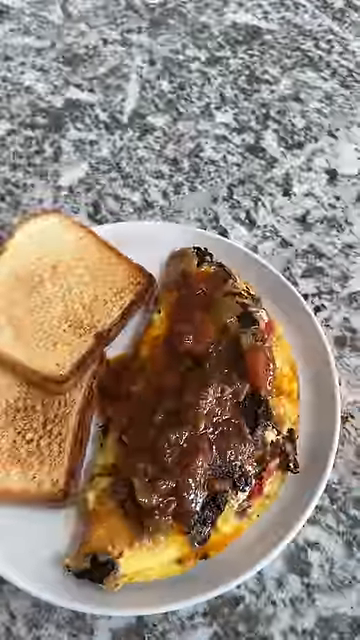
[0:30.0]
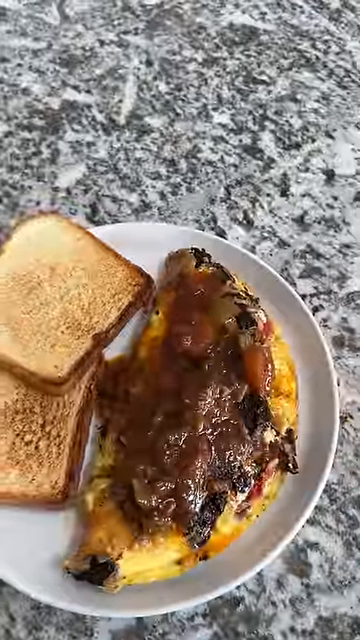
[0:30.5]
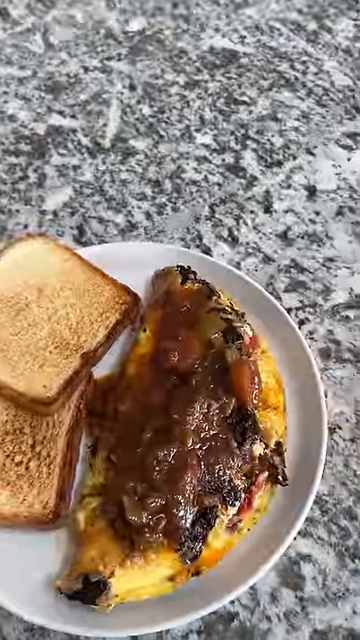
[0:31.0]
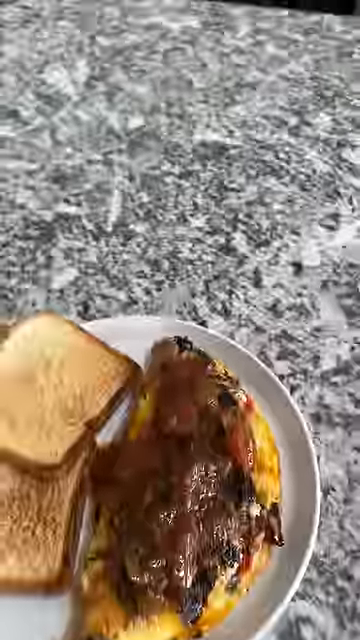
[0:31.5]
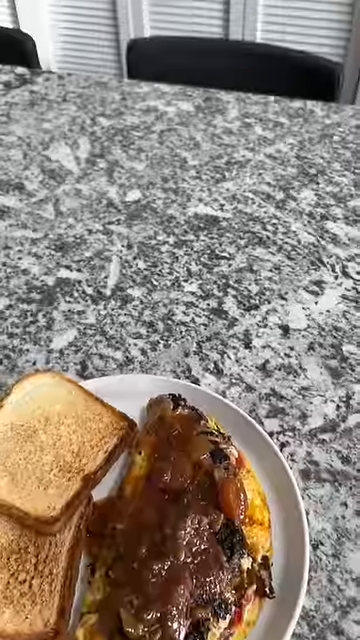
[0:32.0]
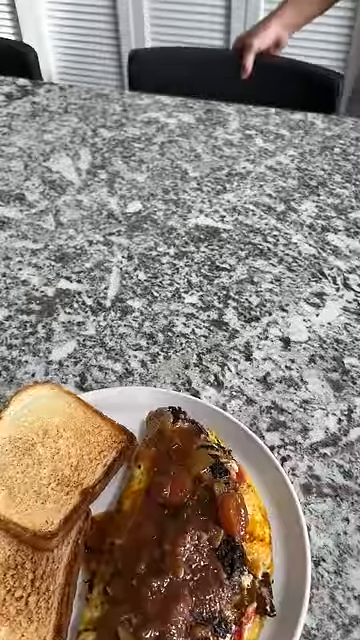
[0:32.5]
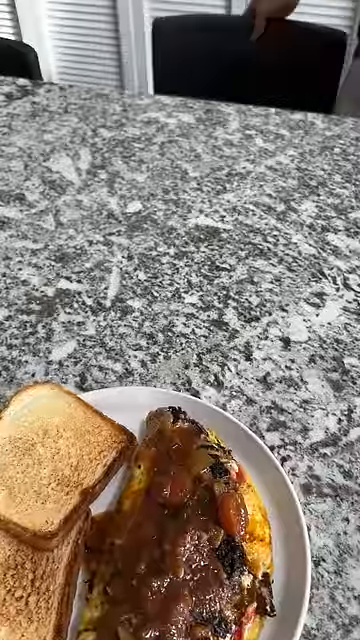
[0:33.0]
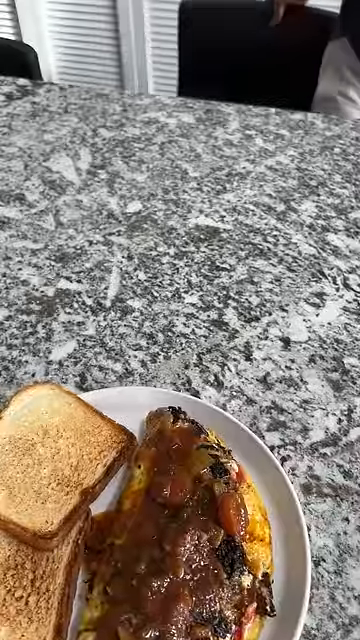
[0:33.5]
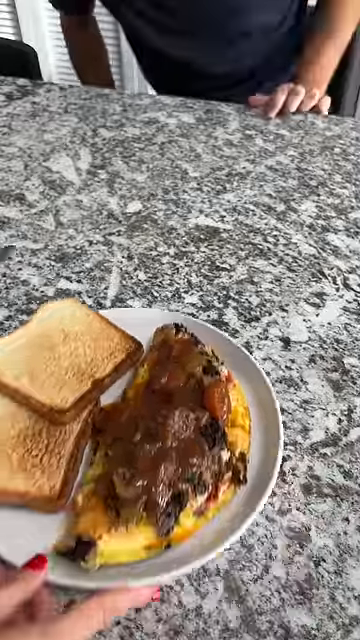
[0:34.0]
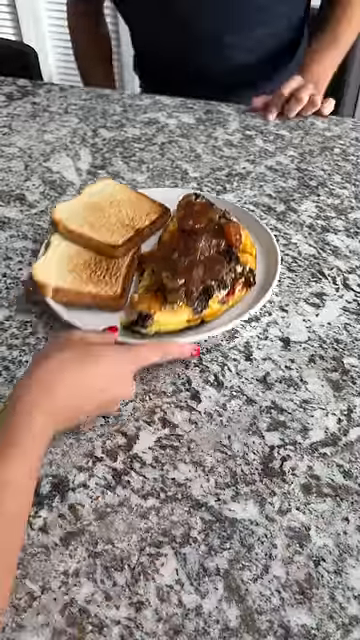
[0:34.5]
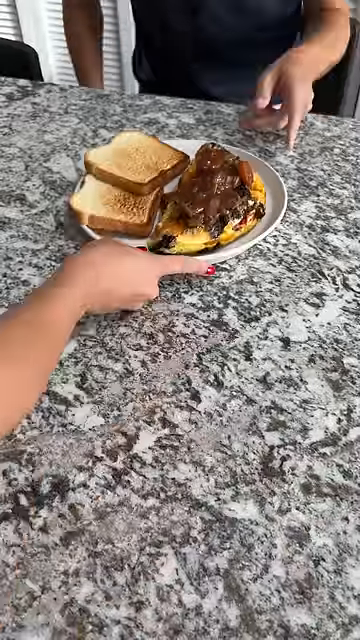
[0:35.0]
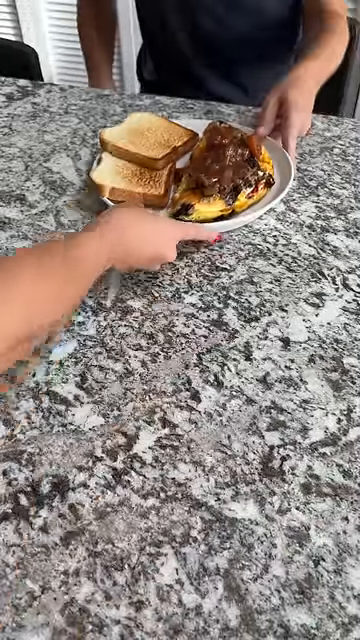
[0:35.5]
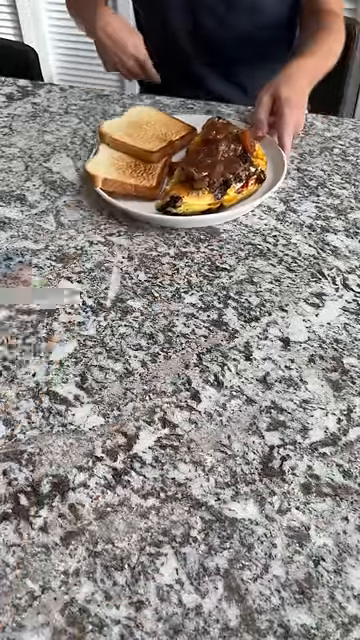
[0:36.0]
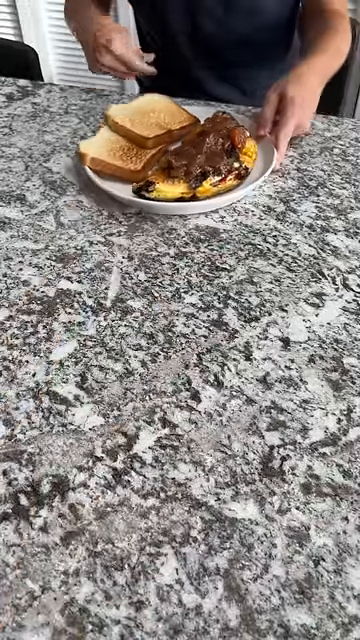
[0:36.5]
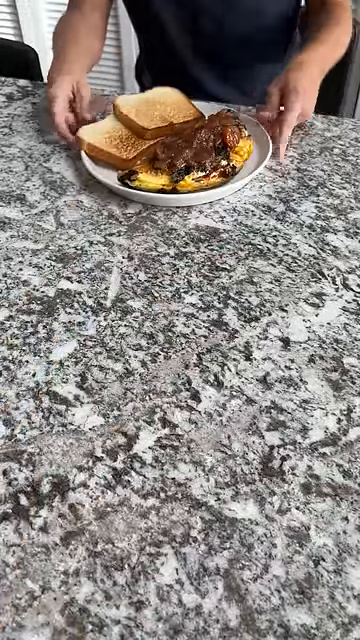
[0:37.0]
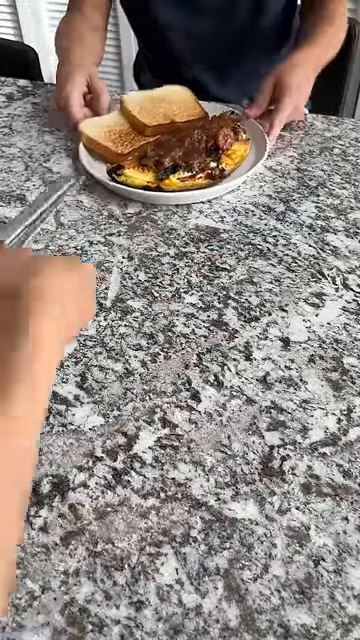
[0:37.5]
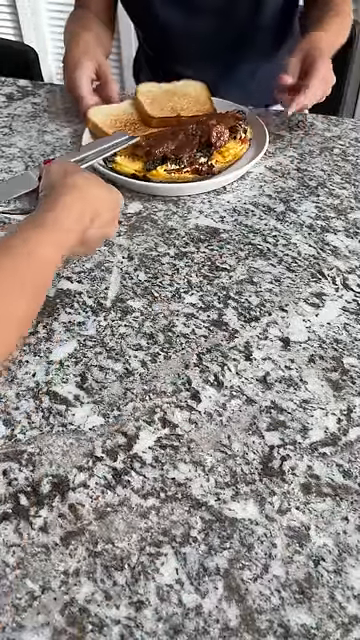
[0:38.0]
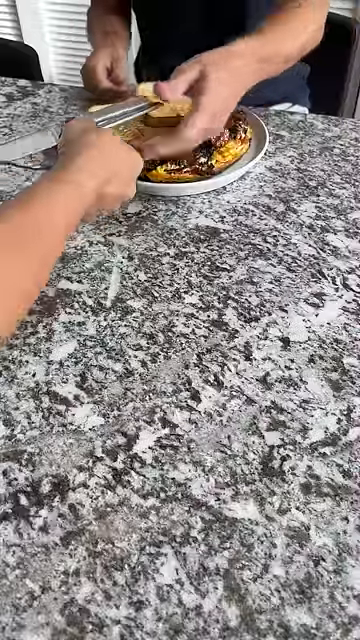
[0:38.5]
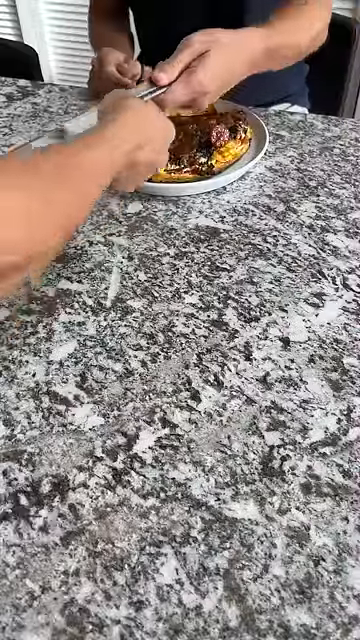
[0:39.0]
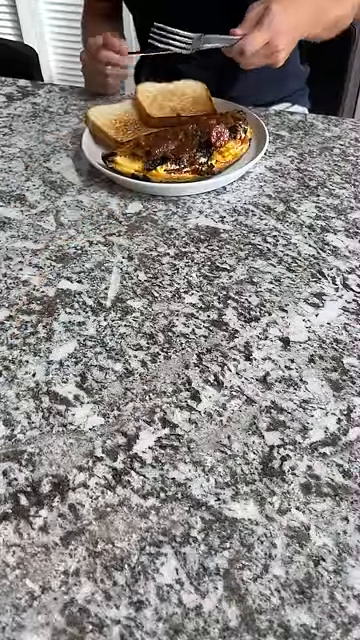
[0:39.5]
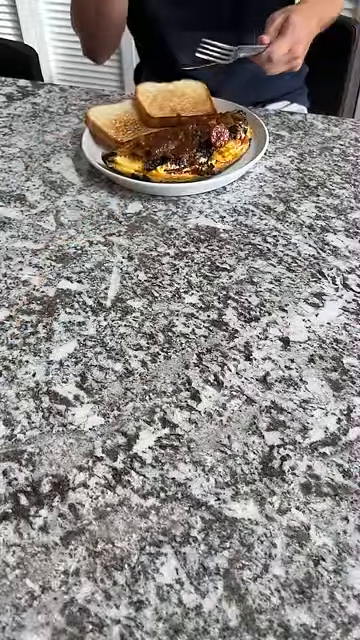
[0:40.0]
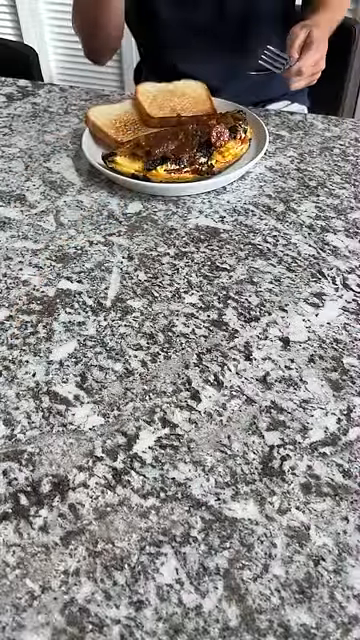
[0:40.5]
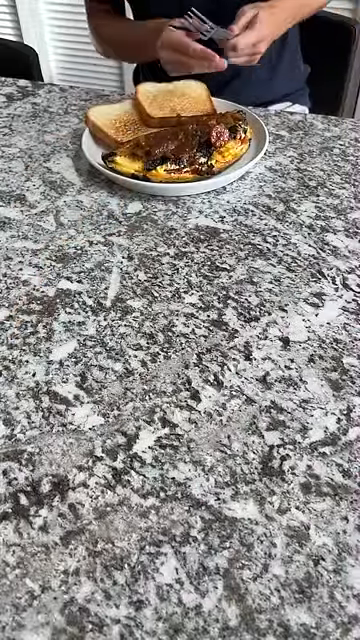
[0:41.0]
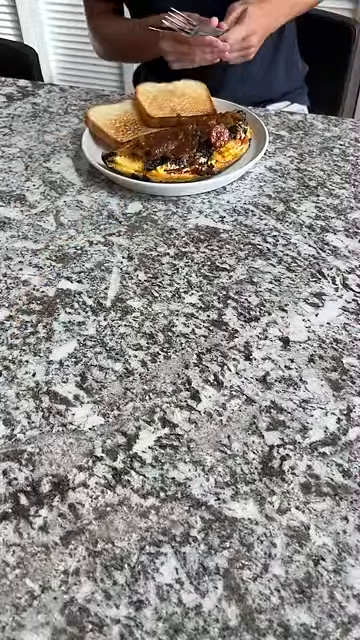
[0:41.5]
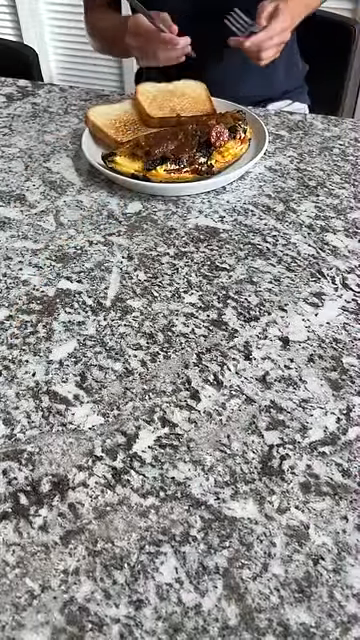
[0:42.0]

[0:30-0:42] With everything ready, the meal is served to what looks like the cook's husband. He appears to wear a blue shirt and gray sweatpants, and his face is not shown. A woman has cooked the meal; as she hands him a knife and fork, her pink fingernail polish is visible. There appears to be a granite countertop island, with what look like white shutters behind them. There are chairs for sitting at the island, which look like regular black plastic chairs. As she hands him the knife and fork, he is about to sit down and start eating.